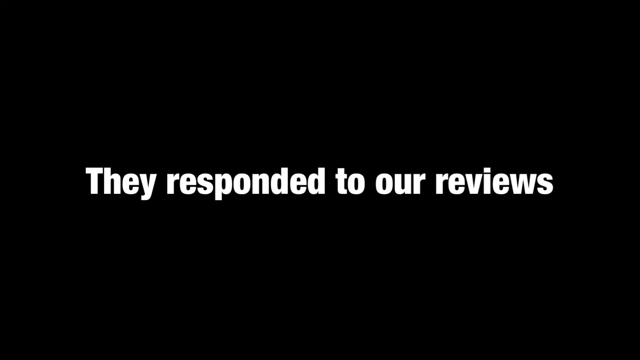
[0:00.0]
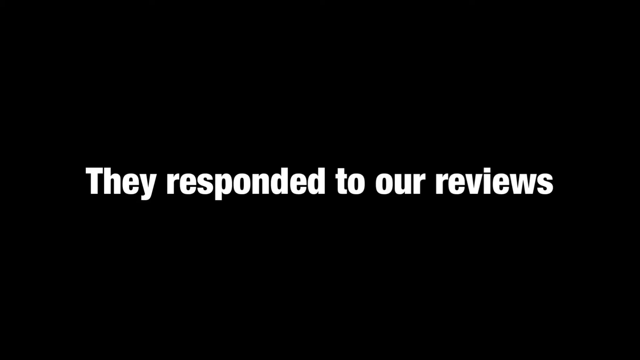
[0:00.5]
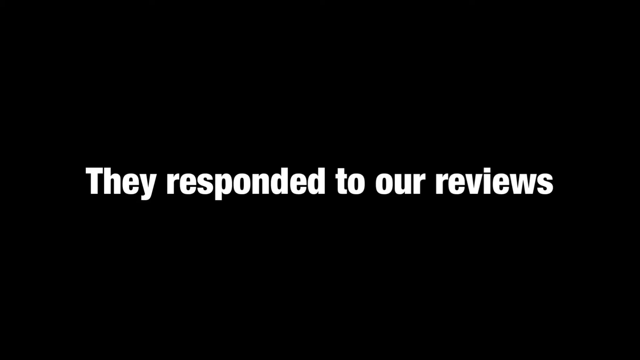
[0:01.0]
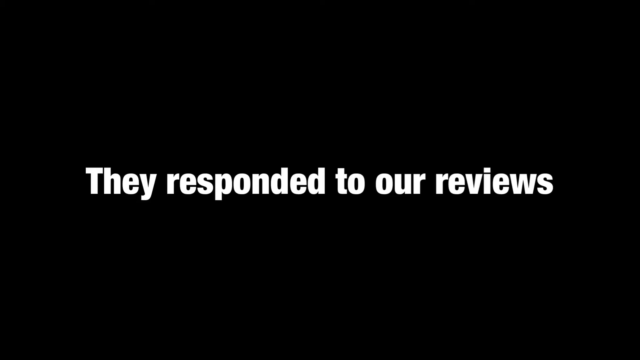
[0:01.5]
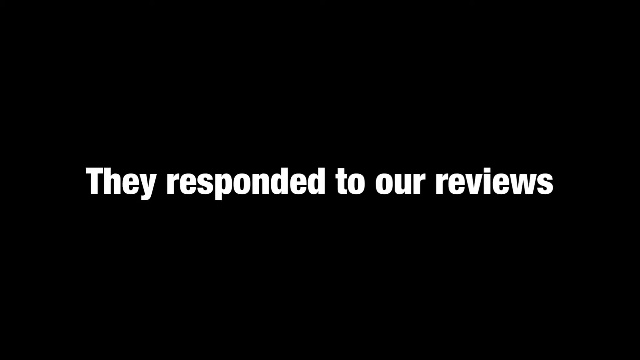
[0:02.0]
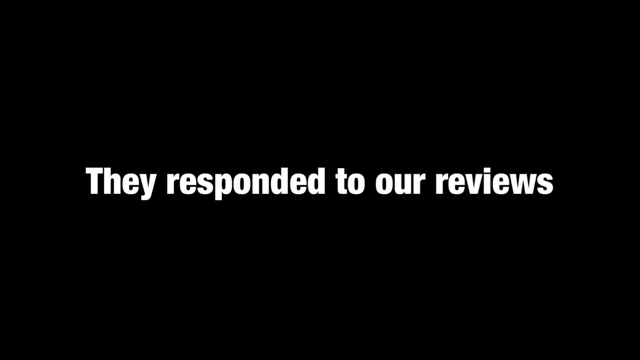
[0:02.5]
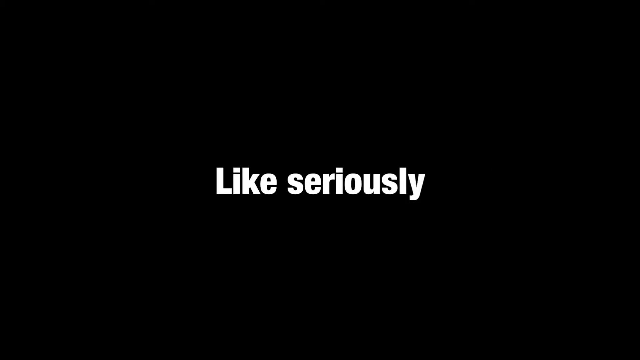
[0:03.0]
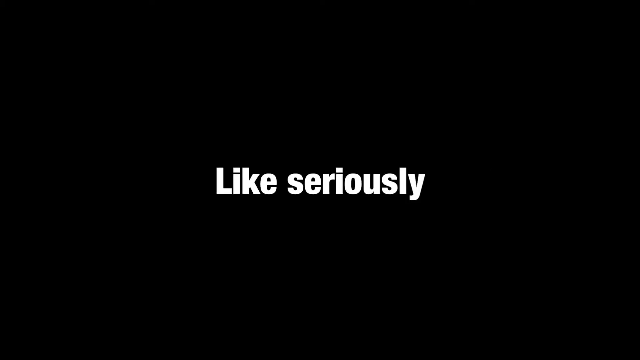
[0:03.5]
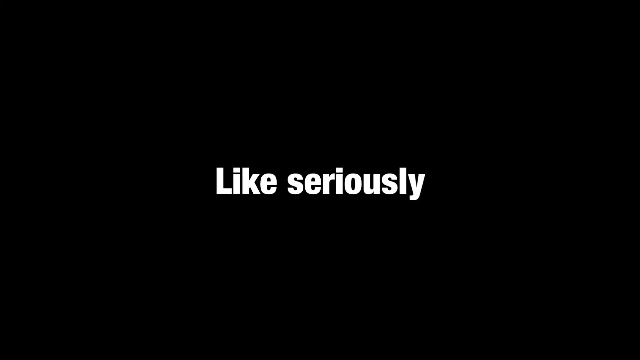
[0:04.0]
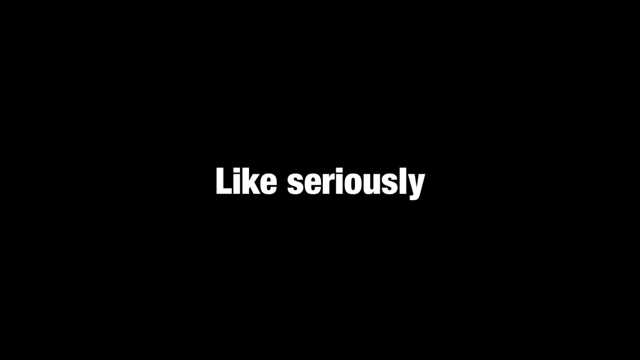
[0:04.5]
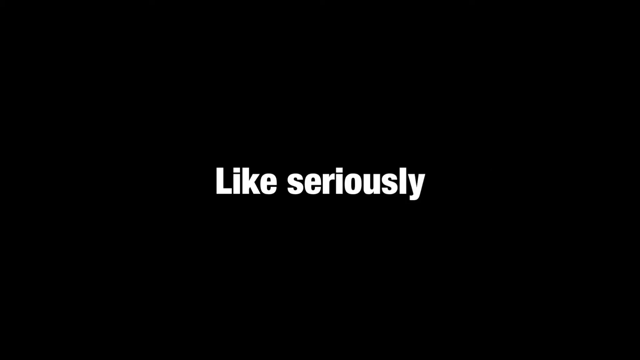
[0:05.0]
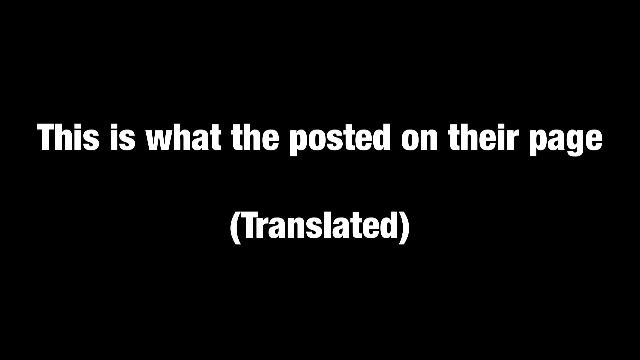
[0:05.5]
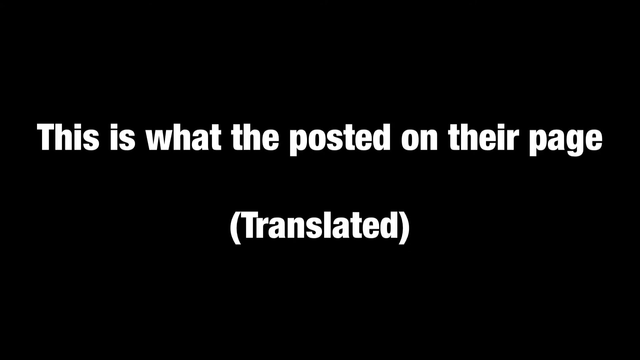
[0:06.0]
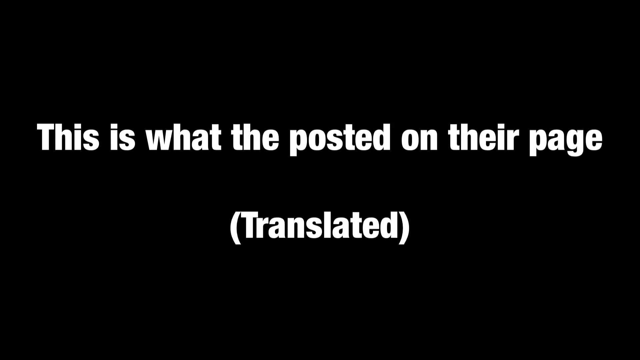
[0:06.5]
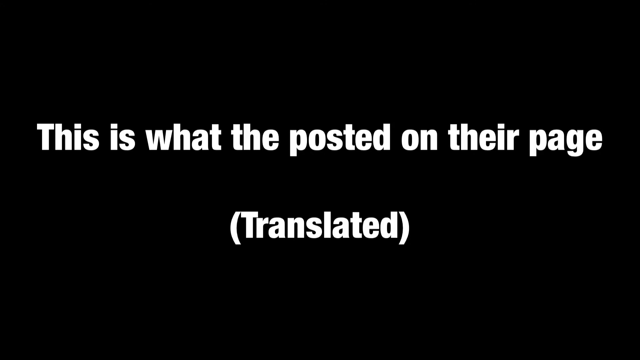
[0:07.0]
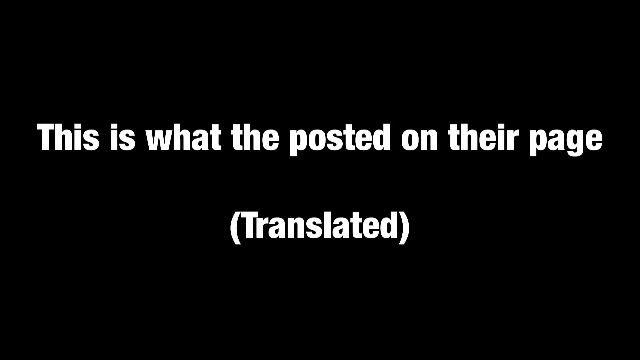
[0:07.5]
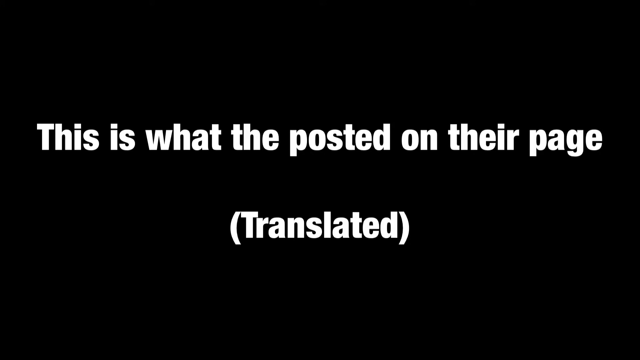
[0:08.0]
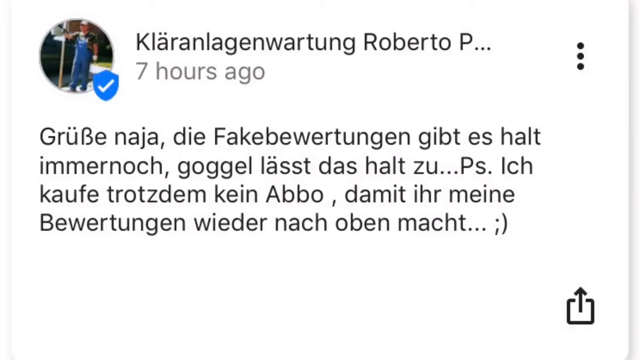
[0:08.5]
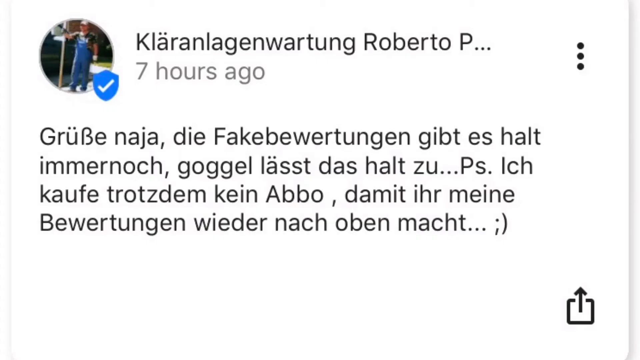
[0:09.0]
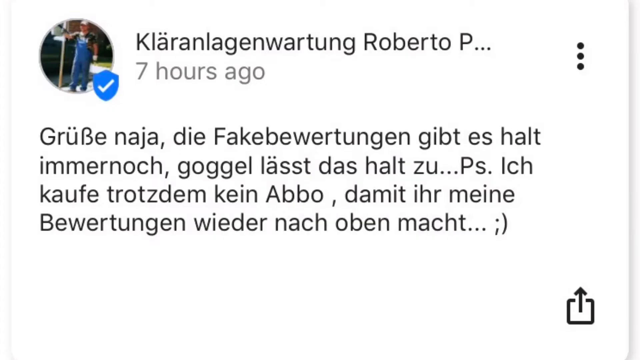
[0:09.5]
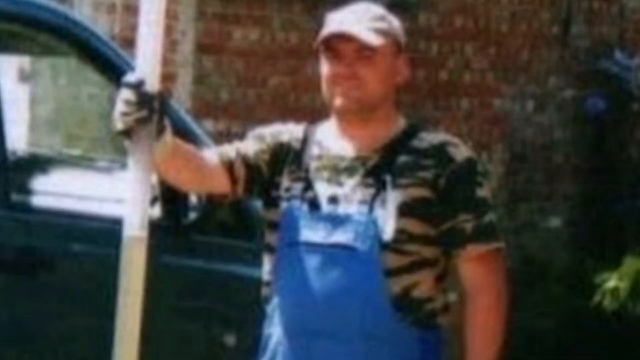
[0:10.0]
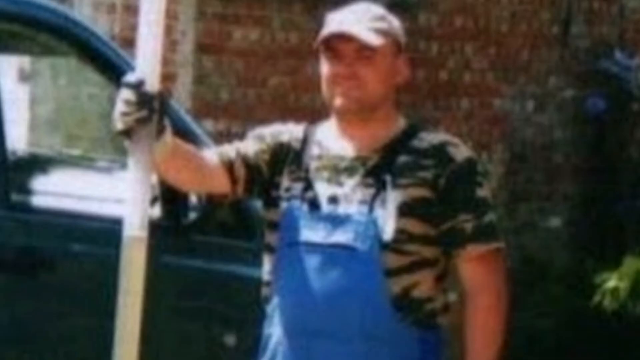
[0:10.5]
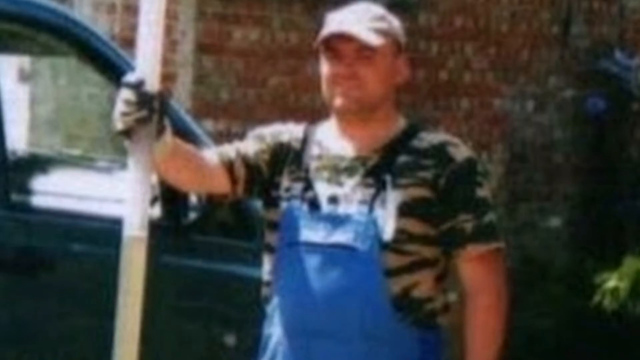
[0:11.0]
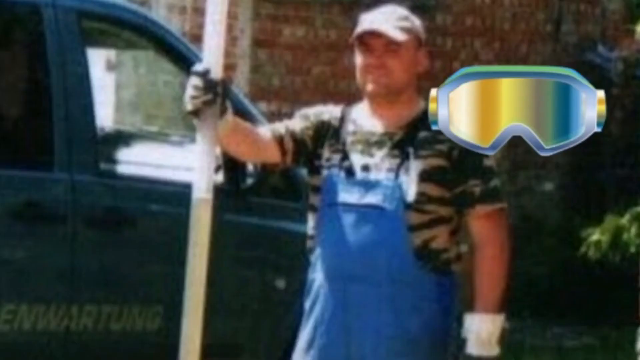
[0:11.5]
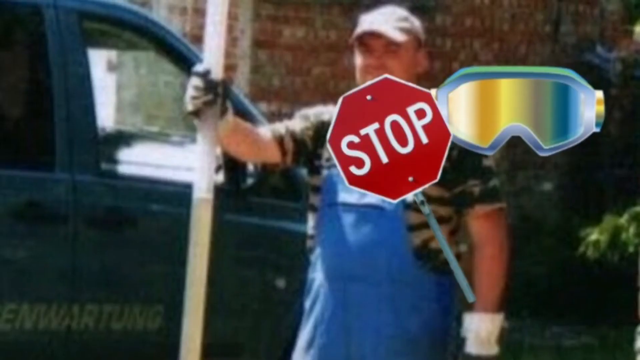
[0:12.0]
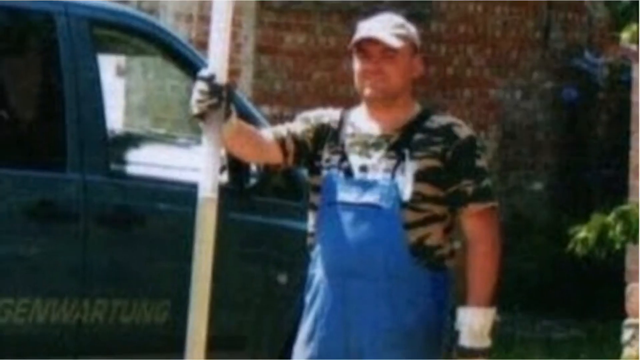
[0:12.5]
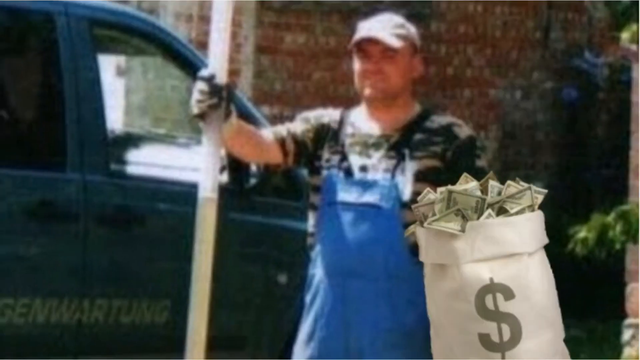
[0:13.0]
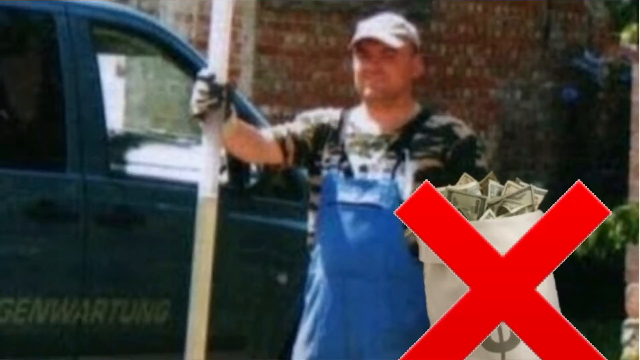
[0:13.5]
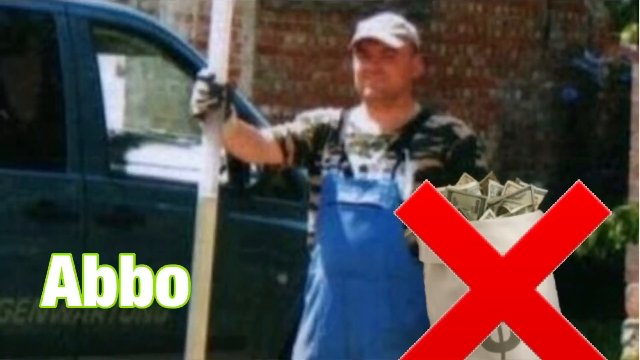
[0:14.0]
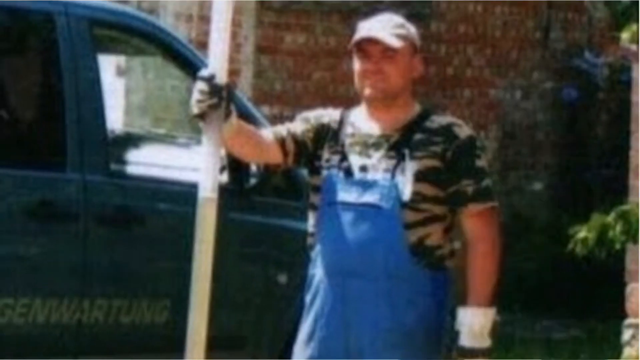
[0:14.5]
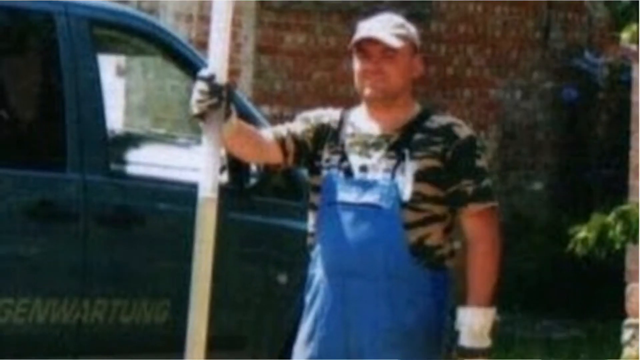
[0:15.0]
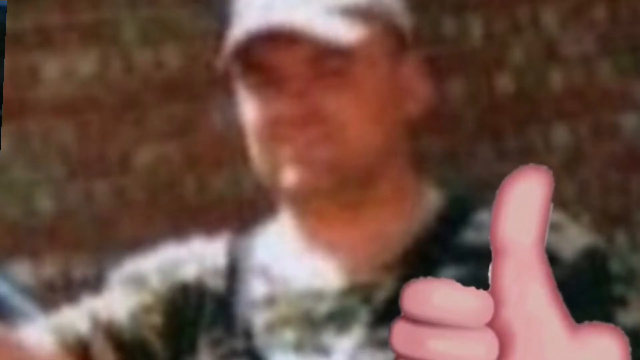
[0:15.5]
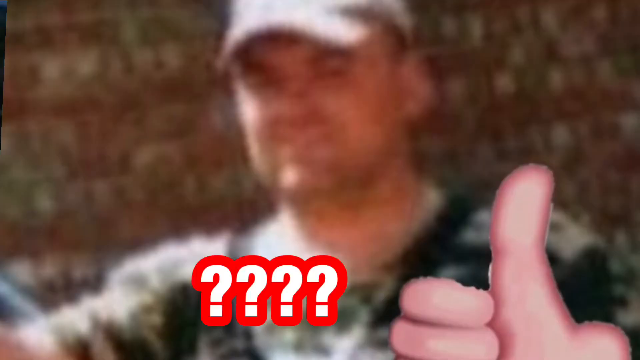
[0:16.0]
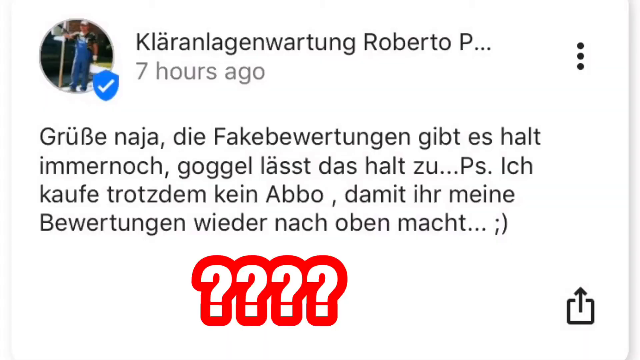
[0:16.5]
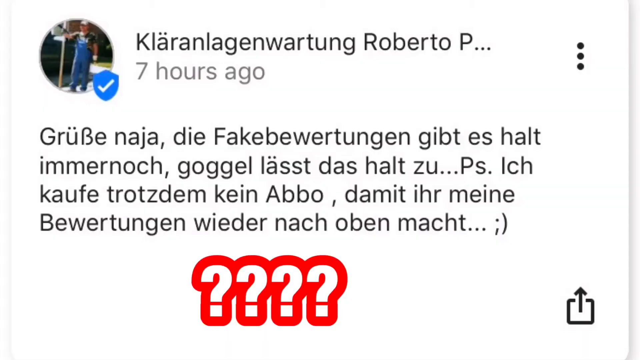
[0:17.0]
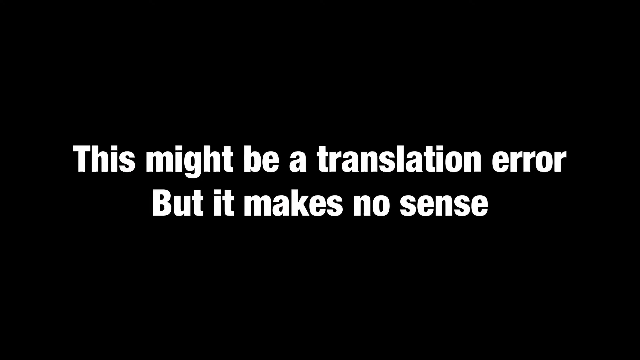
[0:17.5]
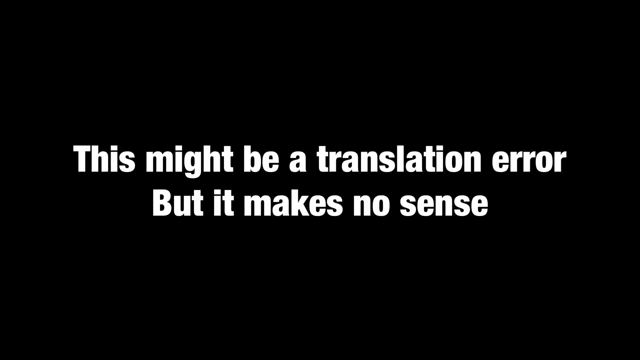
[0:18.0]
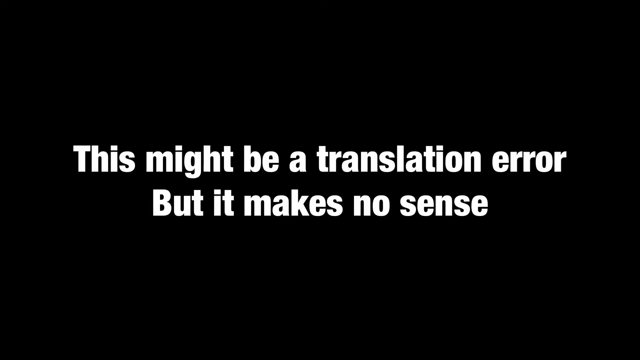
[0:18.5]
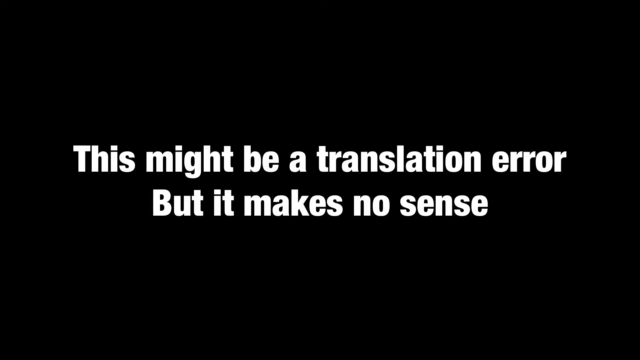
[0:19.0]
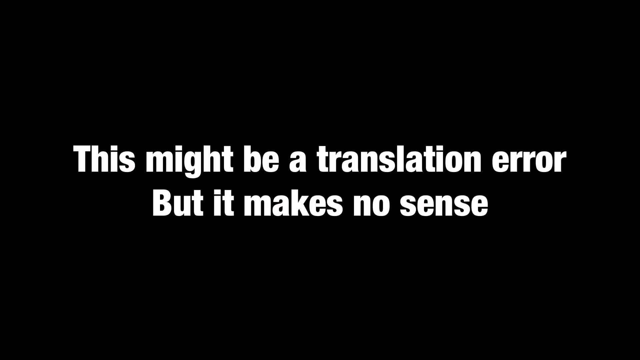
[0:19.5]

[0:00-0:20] The video opens with text reading "they responded to our reviews" in white on a black background. It transitions to further text reading "like, seriously", also white on black, and then to "this is what they posted on their page (translated)", again in white on a black background. Next, an Instagram page in German appears, with a small image of a man wearing blue jeans who seems to be pointing. The name shown is Clara Lange Wanton Roberto, the post is from seven hours ago, and the words are in German. A zoomed-in image of the man follows: he wears a baseball cap, a short-sleeved camo-colored T-shirt, gloves, and blue jeans with straps, and he holds on to a pole while standing next to a vehicle, with a building with a brown wall in the background. A Google image is introduced, and a stop sign flashes on the screen, followed by an image of money and a bag with a red X. On the left side of the frame the text "abo" flashes, and a thumbs-up also flashes on the screen. The video then transitions to text reading "this might be a translation error but it makes no sense" in white on a black background.